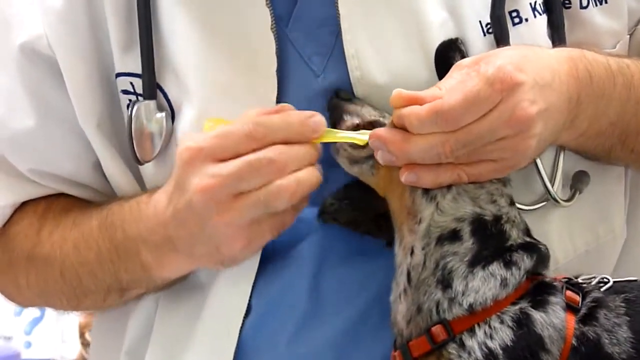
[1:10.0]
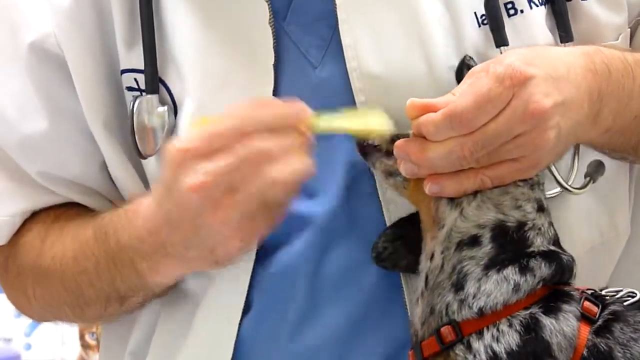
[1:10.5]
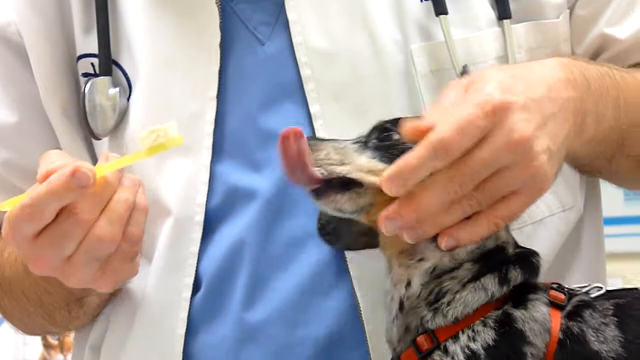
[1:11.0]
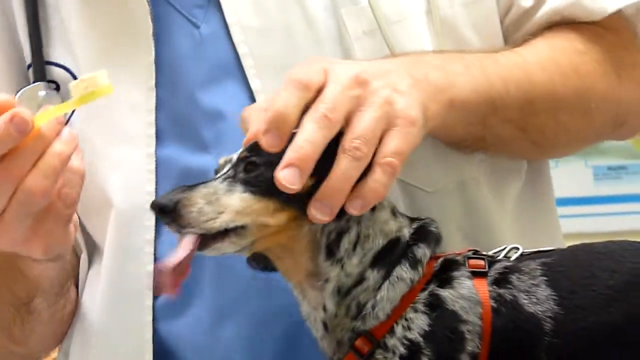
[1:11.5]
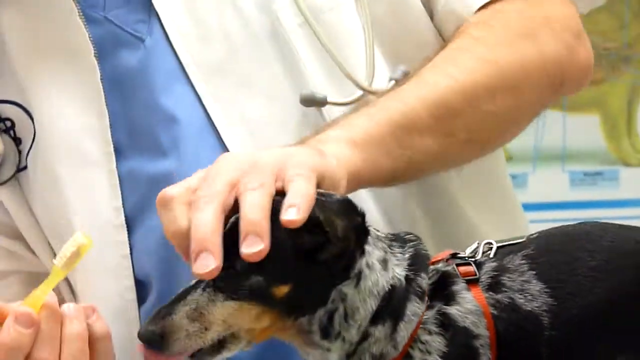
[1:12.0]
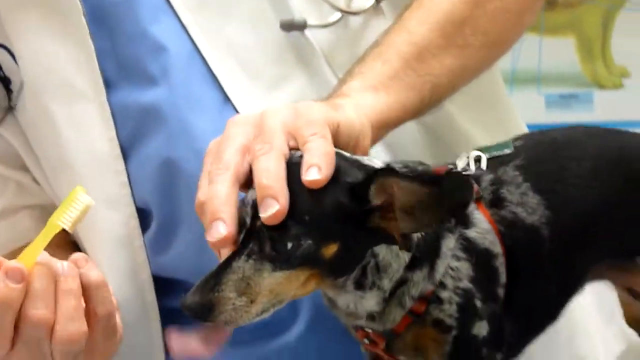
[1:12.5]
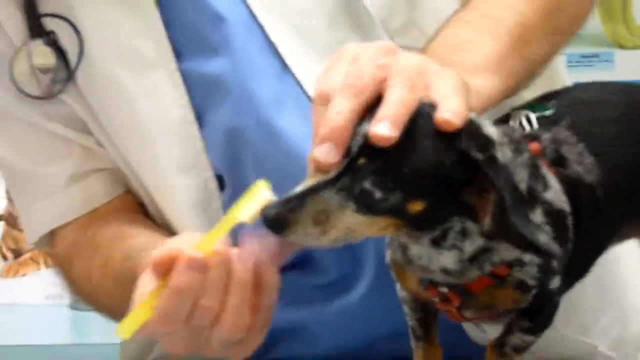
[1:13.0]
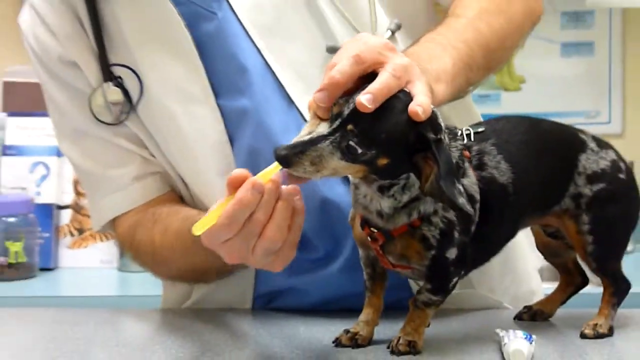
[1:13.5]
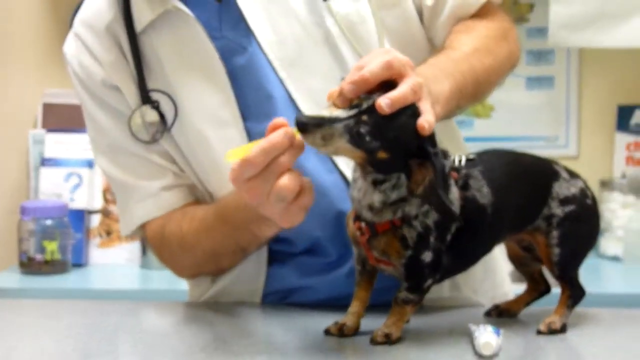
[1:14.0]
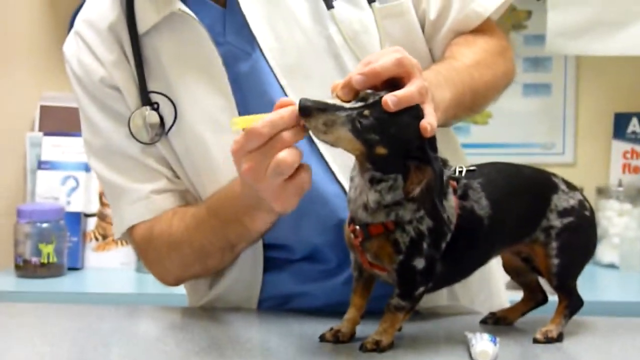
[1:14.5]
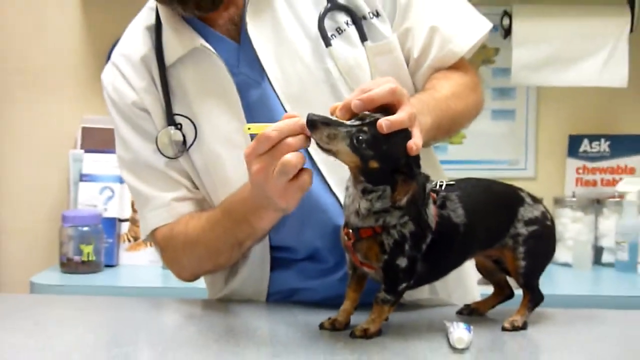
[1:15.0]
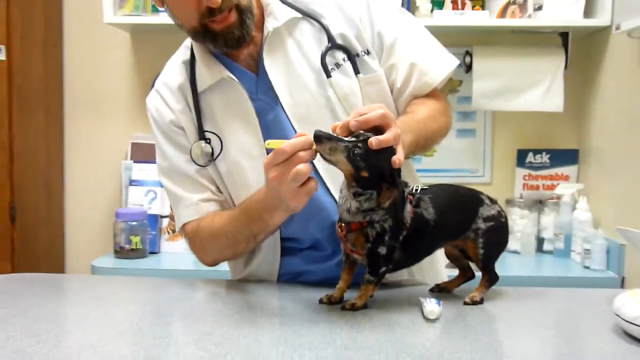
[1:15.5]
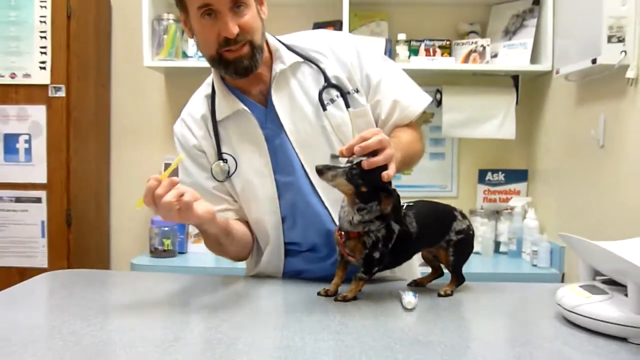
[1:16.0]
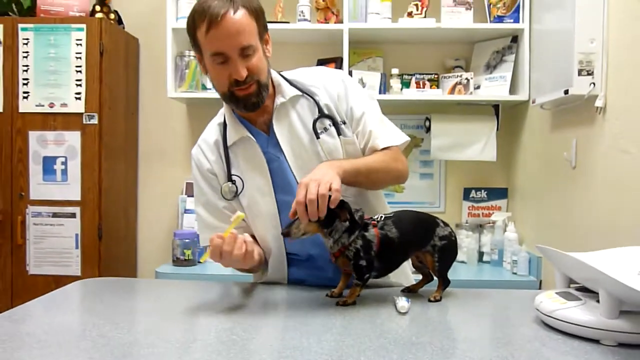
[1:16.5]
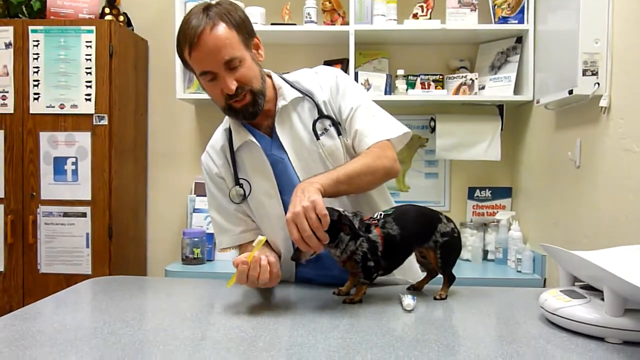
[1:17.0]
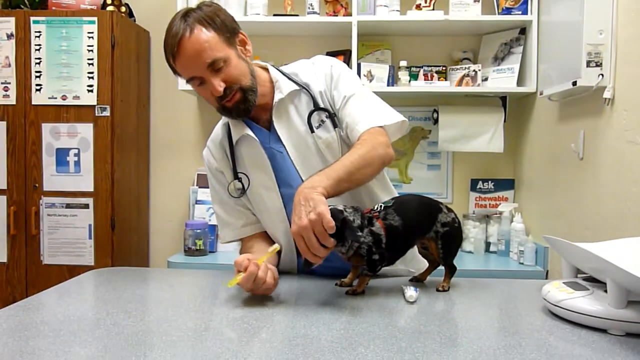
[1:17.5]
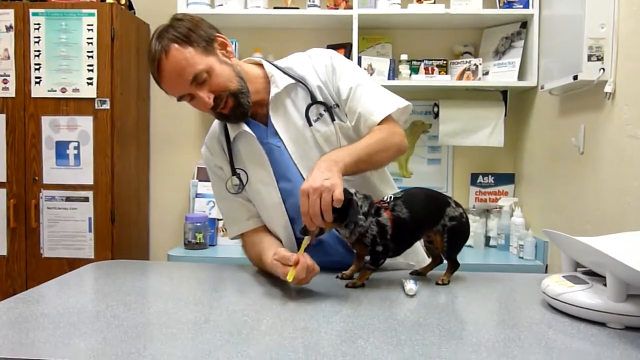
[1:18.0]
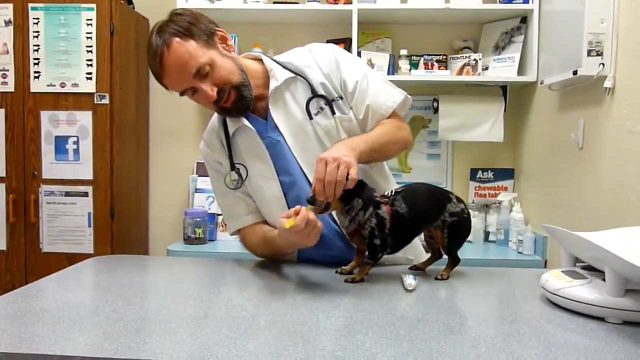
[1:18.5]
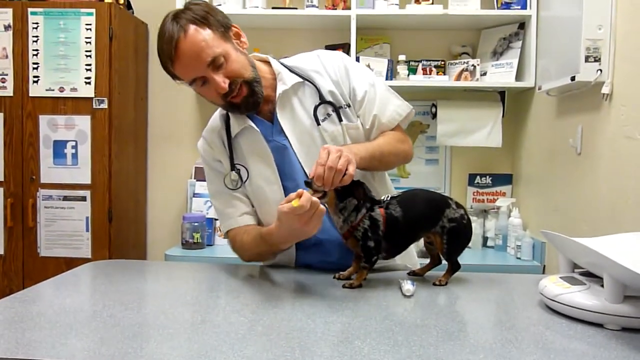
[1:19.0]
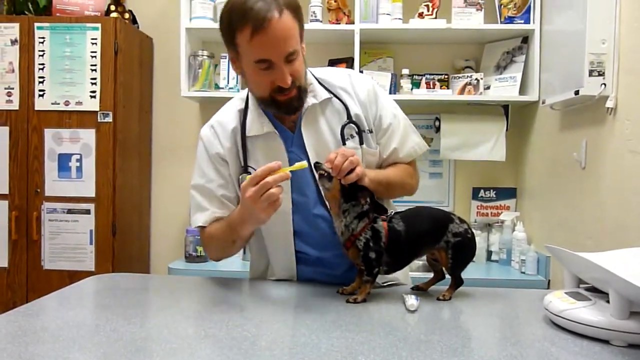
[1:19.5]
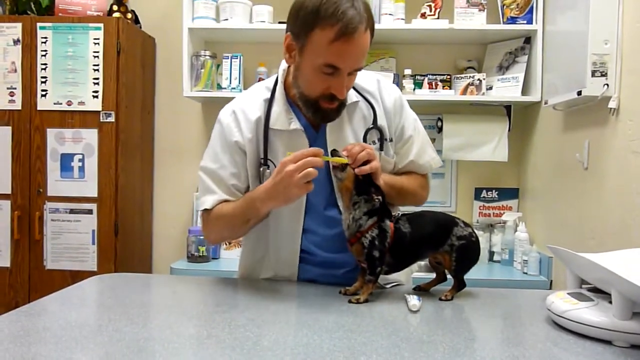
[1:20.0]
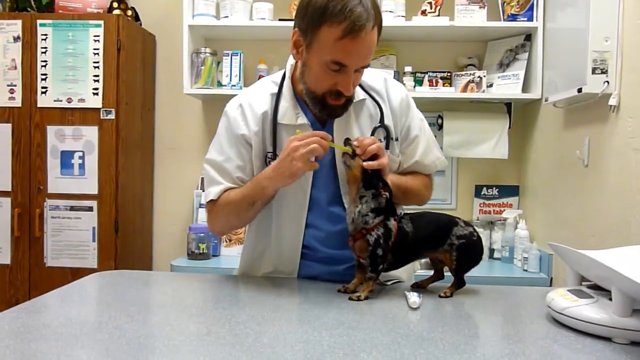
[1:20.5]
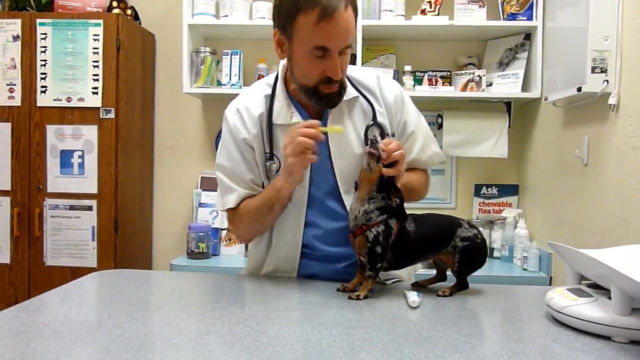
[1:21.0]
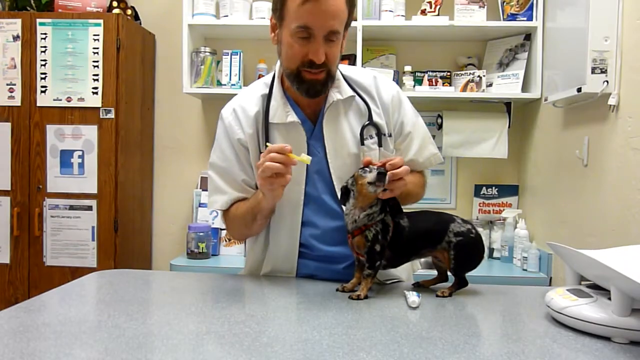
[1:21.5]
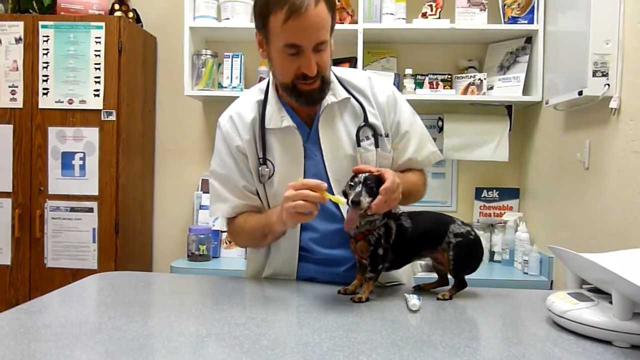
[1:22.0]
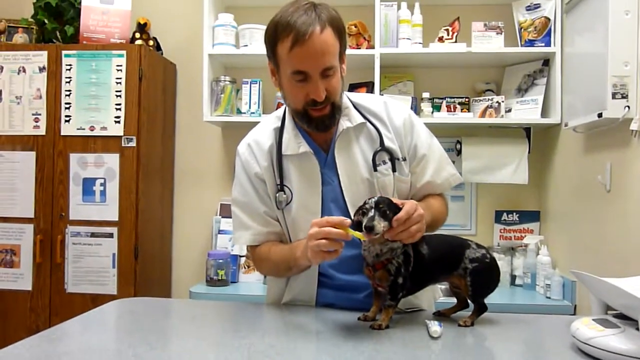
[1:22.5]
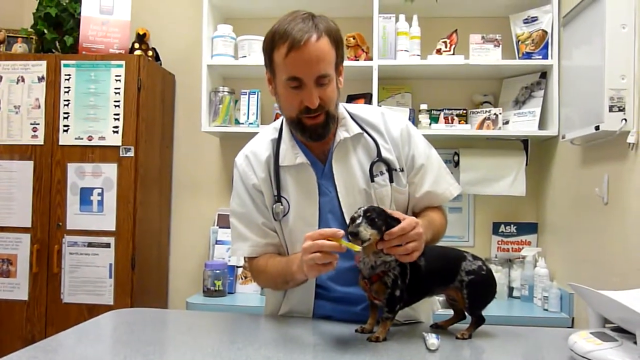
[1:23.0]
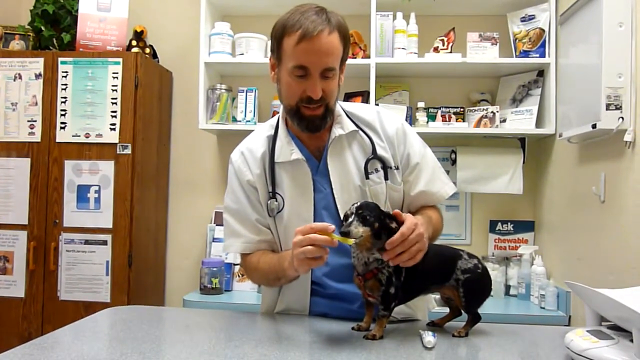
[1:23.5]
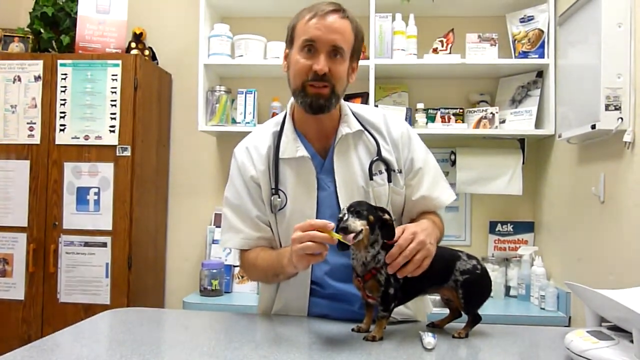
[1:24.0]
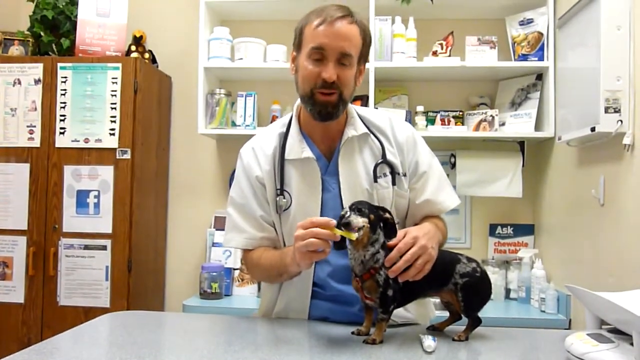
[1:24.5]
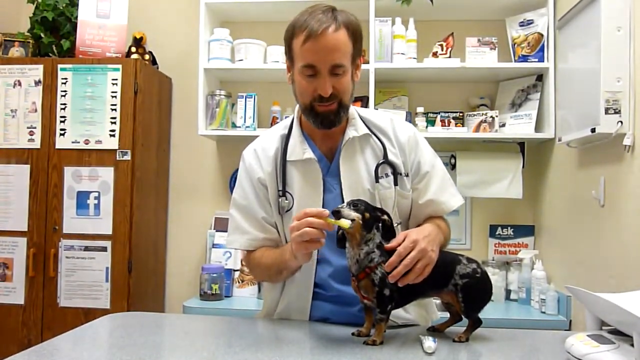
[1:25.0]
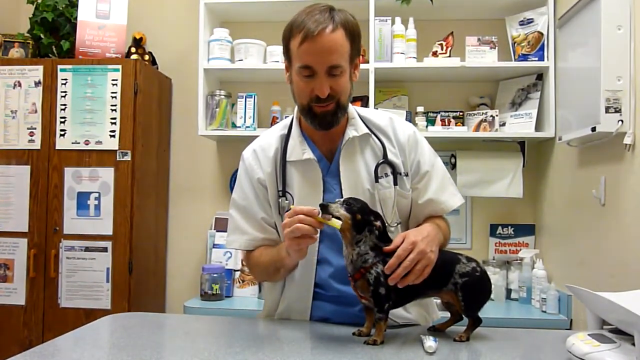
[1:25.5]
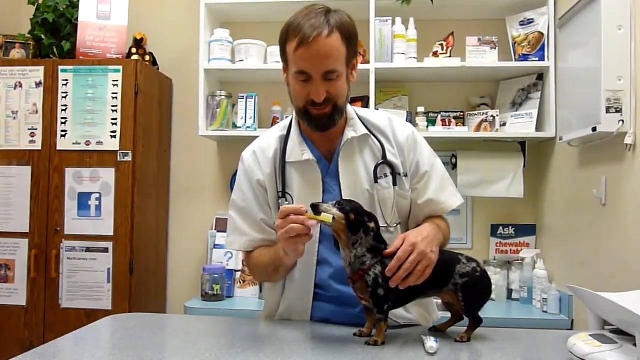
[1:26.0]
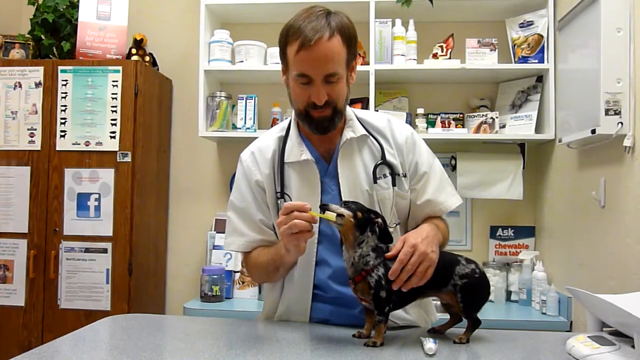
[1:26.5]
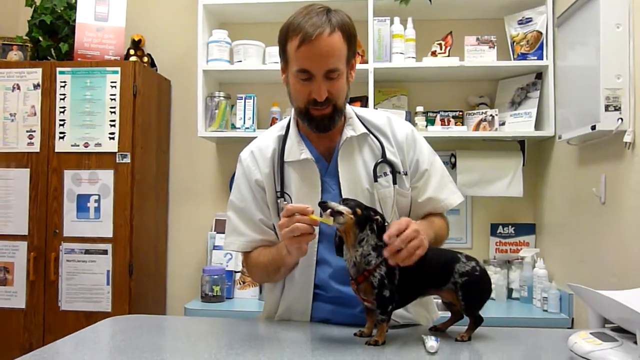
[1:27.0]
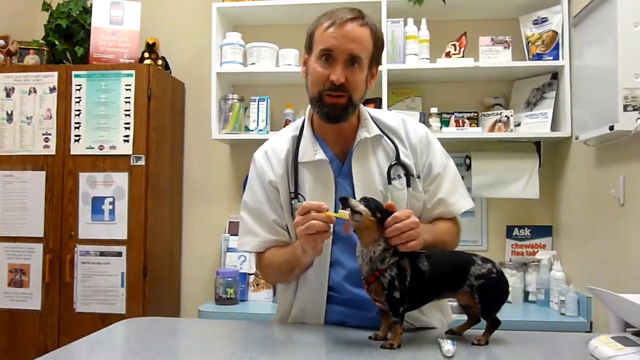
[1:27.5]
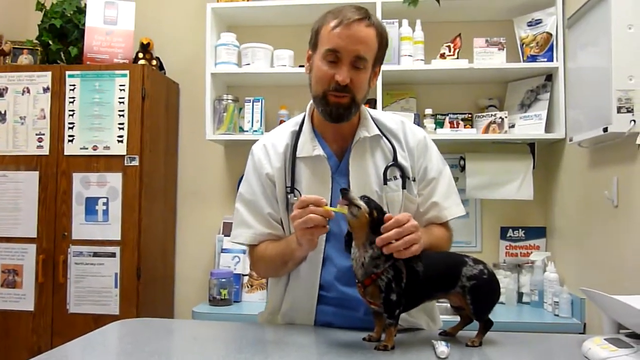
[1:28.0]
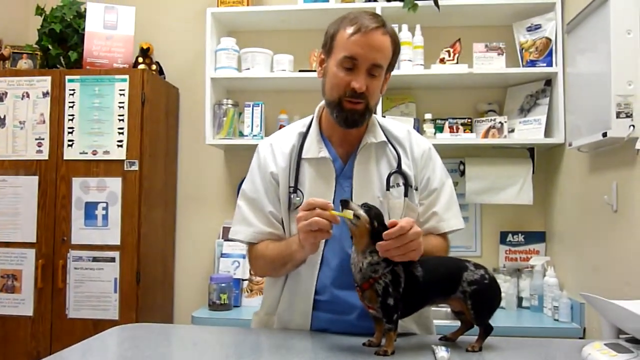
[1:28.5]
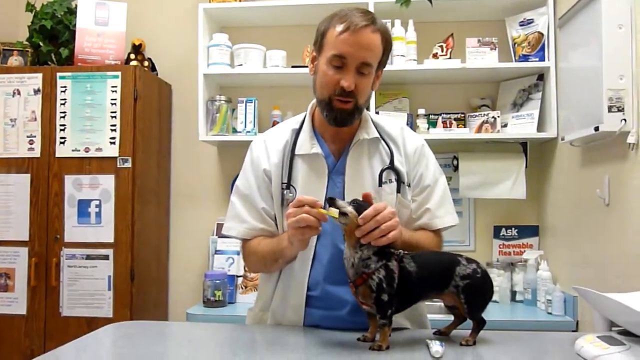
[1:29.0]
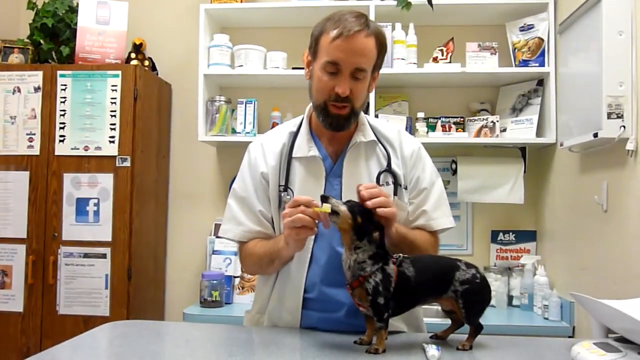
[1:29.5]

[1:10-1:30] The camera zooms in so the vet's face is no longer visible, but the dog is clearly seen. The vet uses his right hand to brush the dog's teeth and his left hand to hold the dog's mouth open to reach the back teeth. He removes the toothbrush, adjusts his hand placement to open the other side of the dog's mouth, and begins brushing the right set of teeth. He brushes both sides vigorously, and near the end lets the dog lick the toothpaste off the toothbrush. The dog appears very happy, and the vet brushes the teeth carefully.